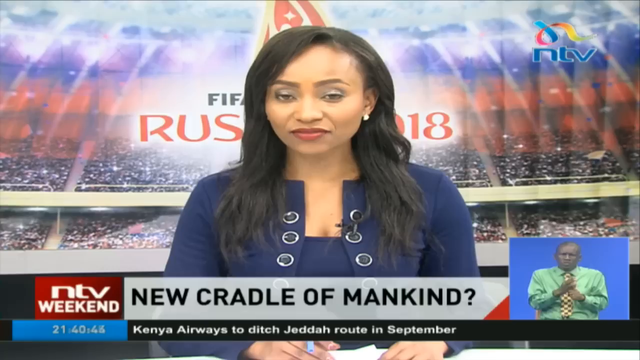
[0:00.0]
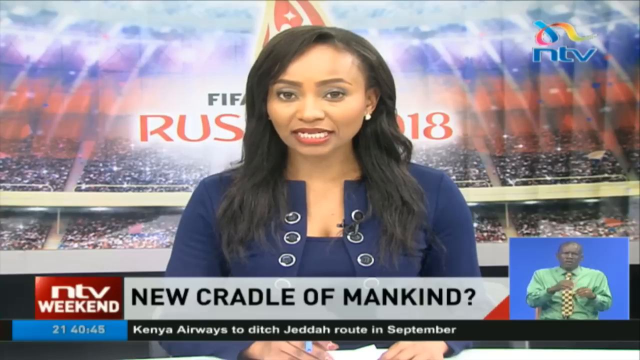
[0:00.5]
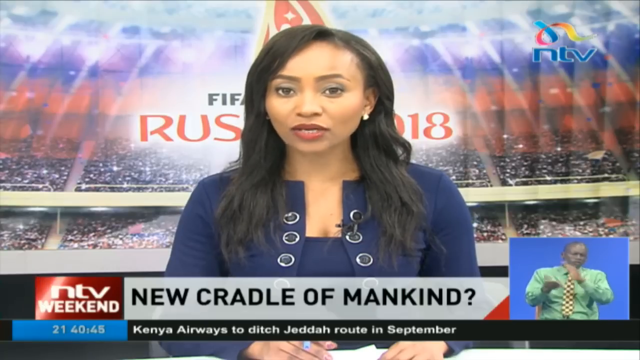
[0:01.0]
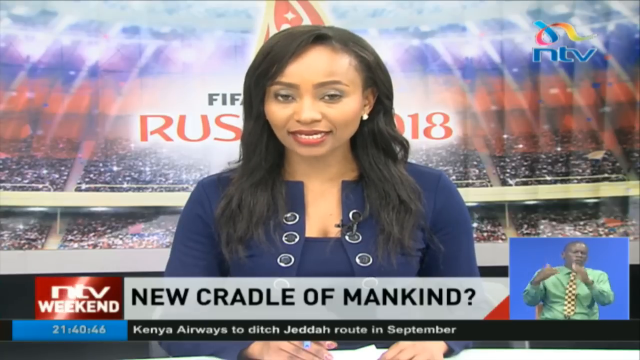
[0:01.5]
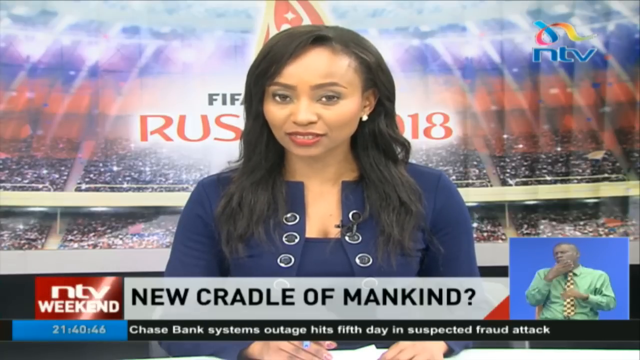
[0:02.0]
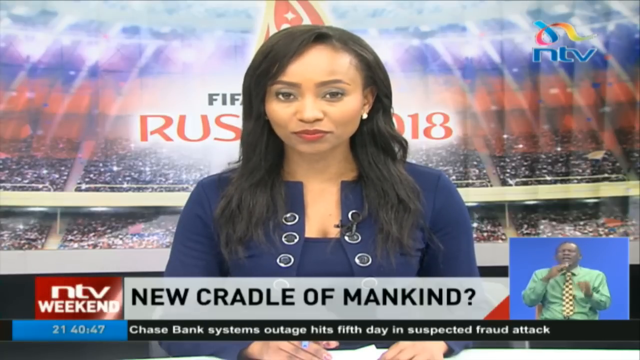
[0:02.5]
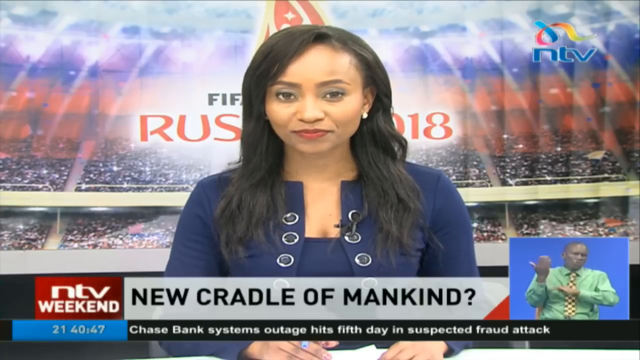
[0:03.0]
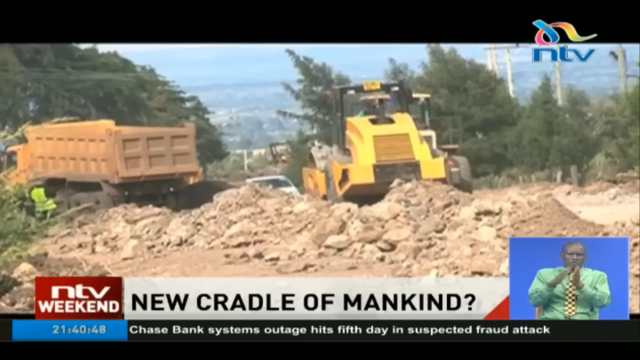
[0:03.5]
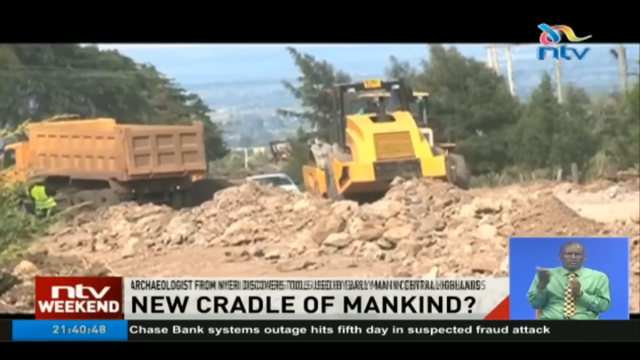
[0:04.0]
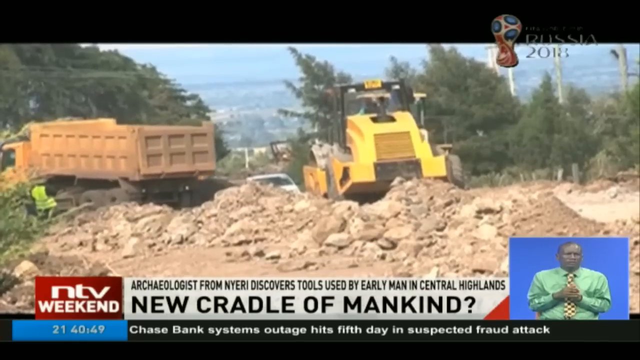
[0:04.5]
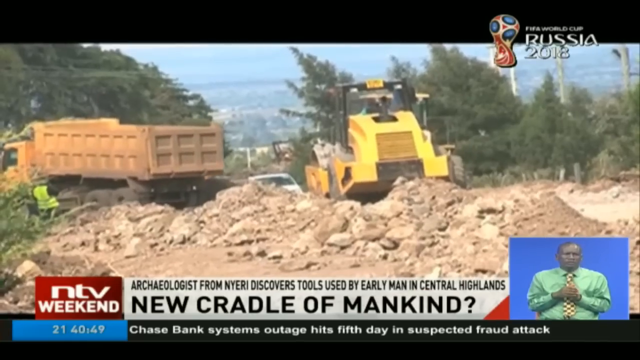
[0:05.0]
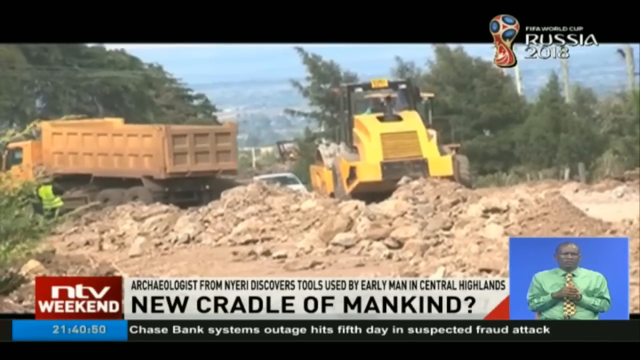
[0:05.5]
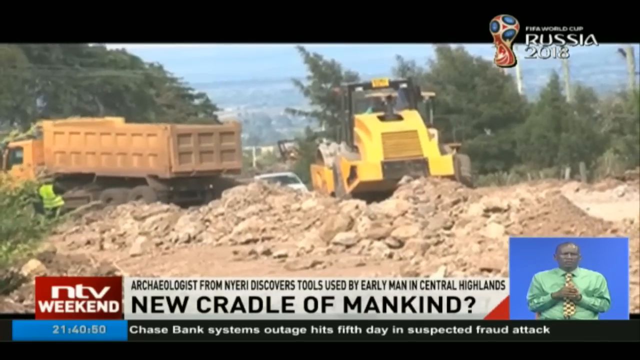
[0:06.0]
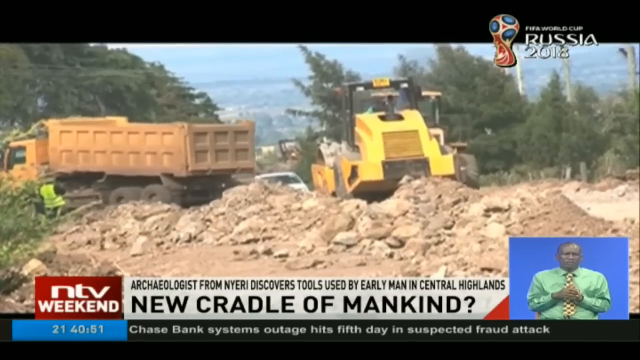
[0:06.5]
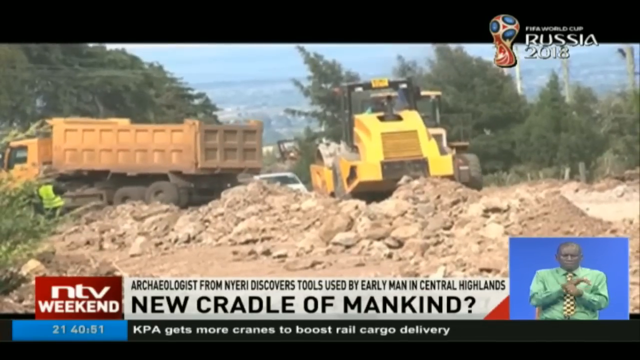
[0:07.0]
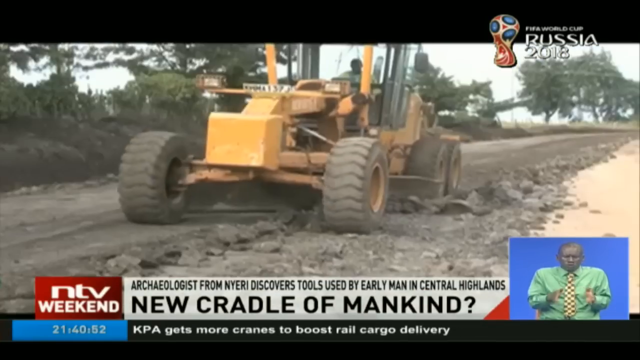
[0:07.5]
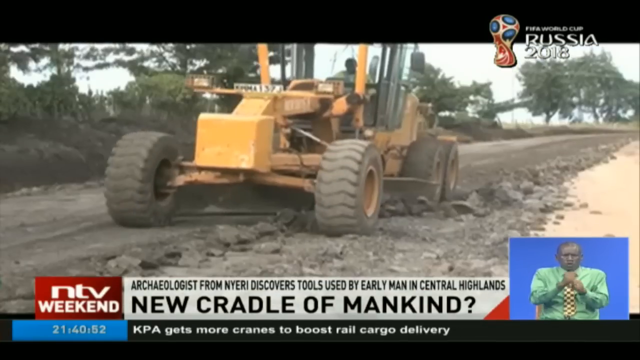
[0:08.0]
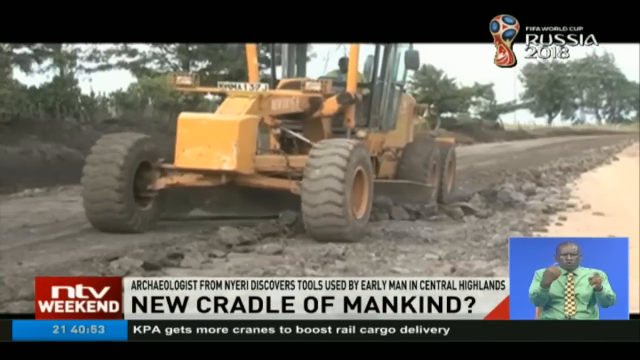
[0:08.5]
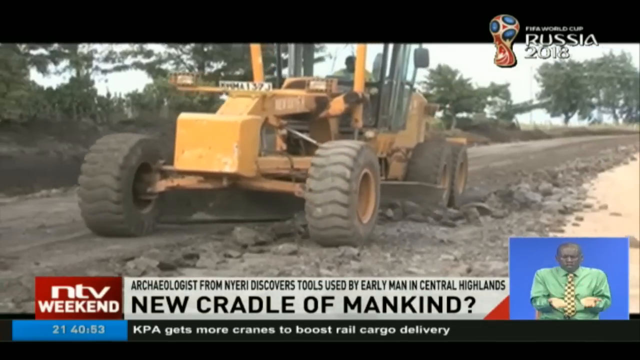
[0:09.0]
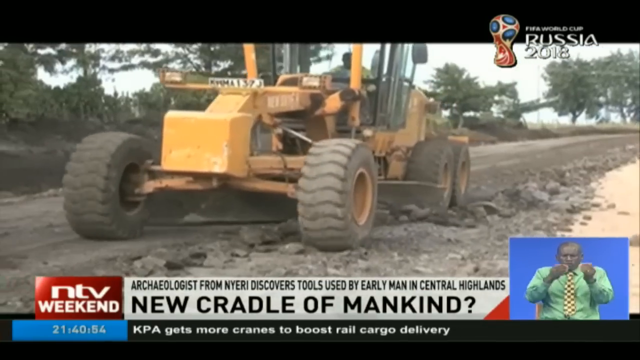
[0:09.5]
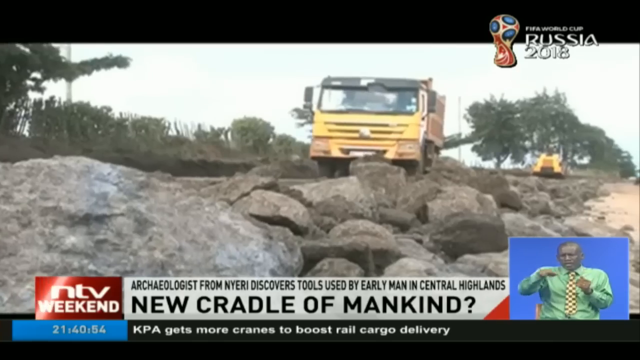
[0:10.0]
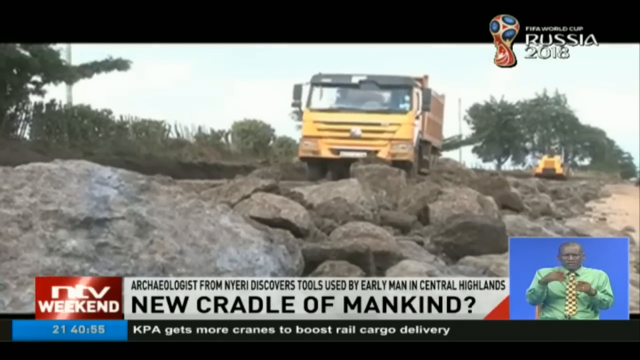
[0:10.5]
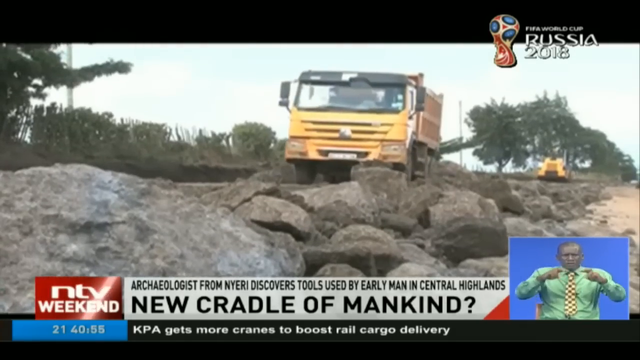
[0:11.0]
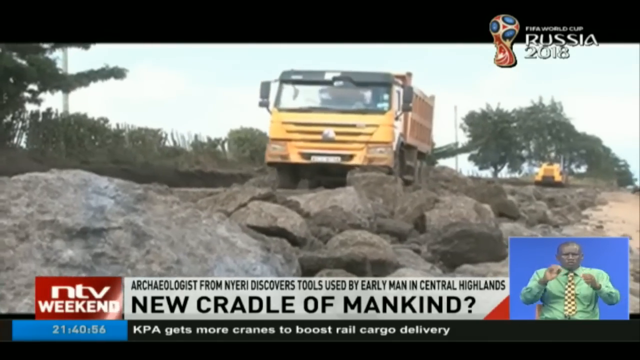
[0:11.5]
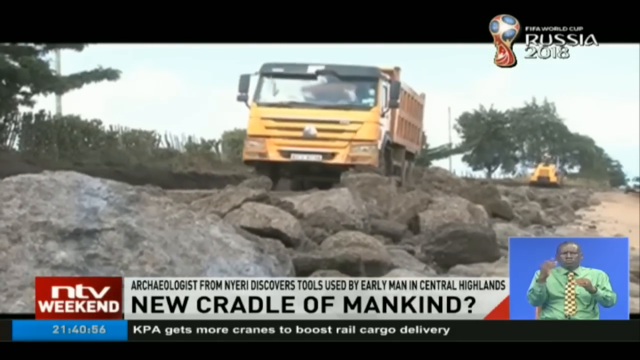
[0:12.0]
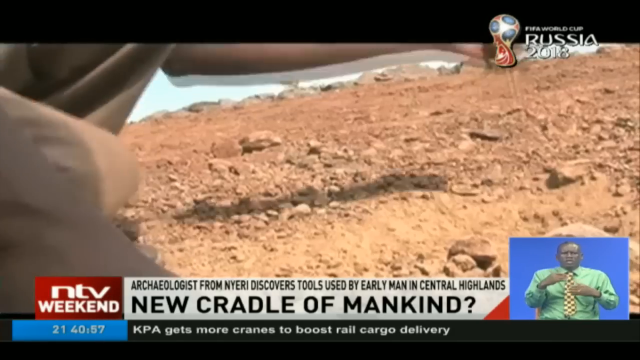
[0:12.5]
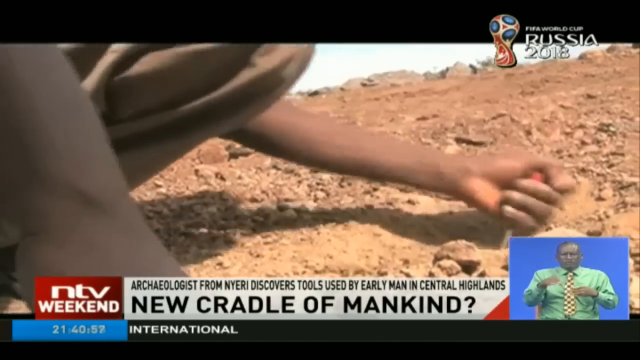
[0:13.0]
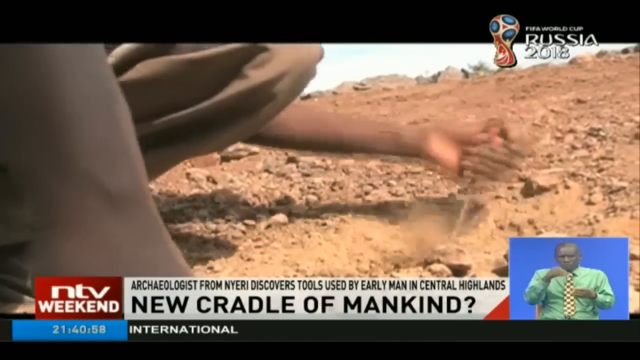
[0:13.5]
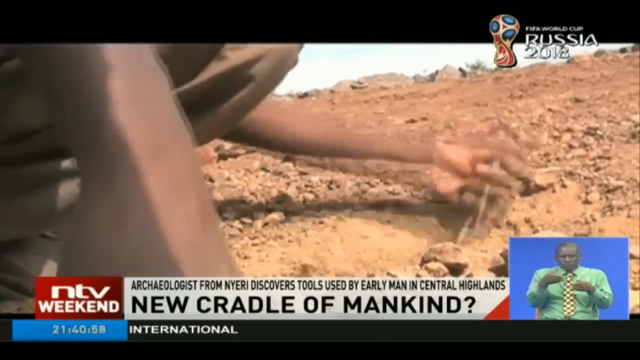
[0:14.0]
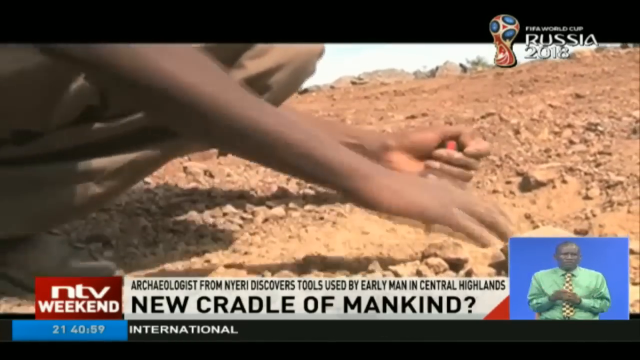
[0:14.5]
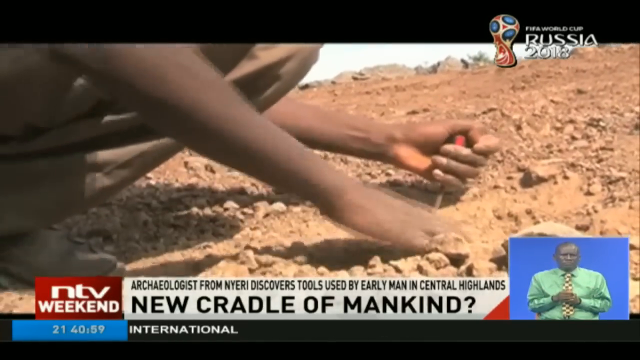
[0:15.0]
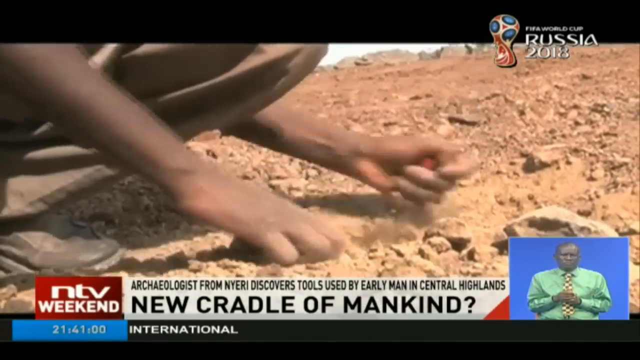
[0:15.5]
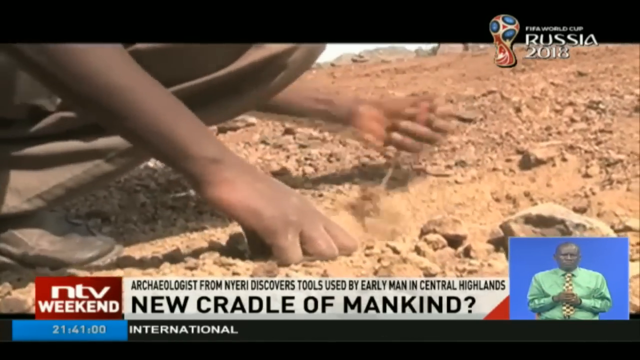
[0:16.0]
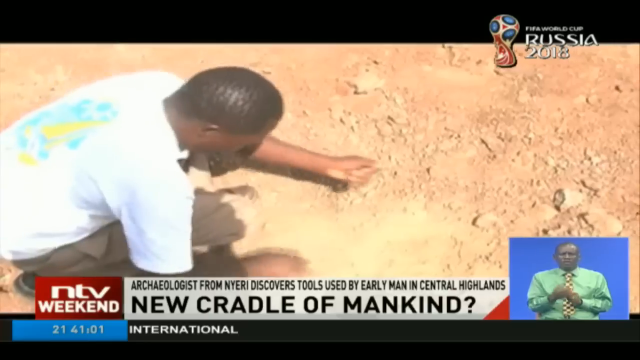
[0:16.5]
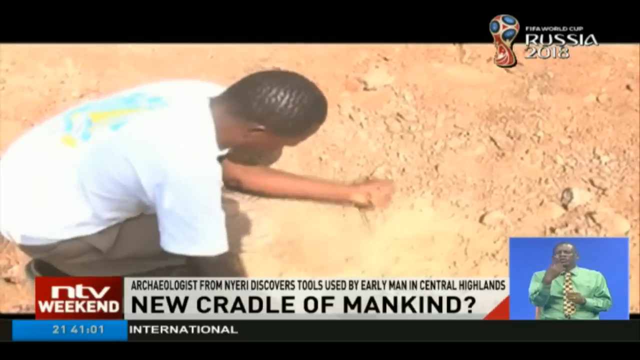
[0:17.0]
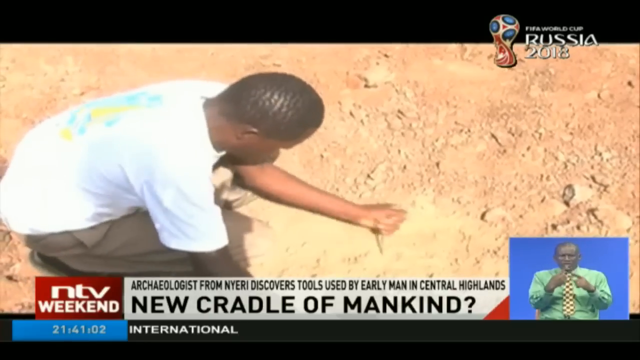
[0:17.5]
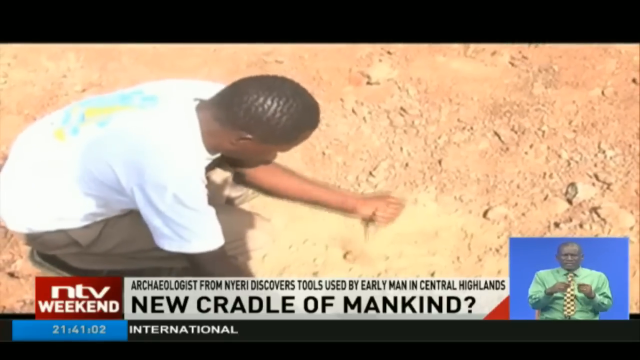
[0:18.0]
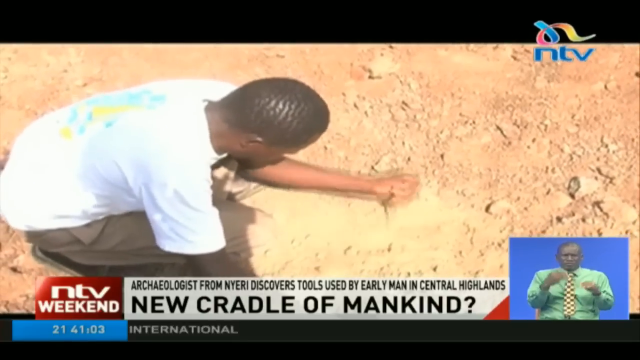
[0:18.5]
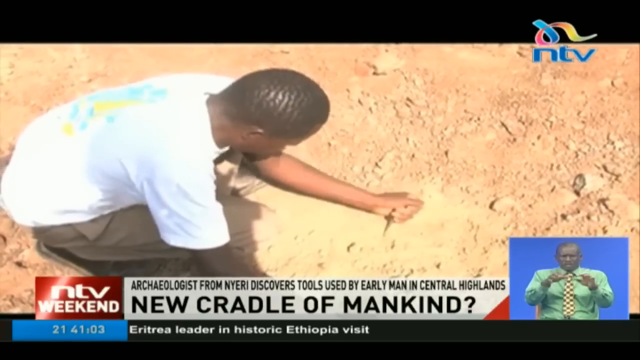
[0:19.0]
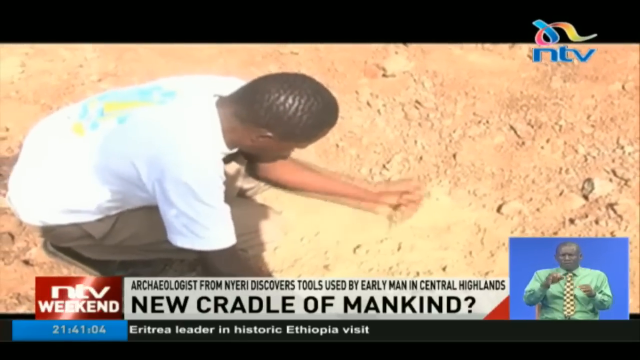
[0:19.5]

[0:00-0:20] The video is about a new cradle of mankind.